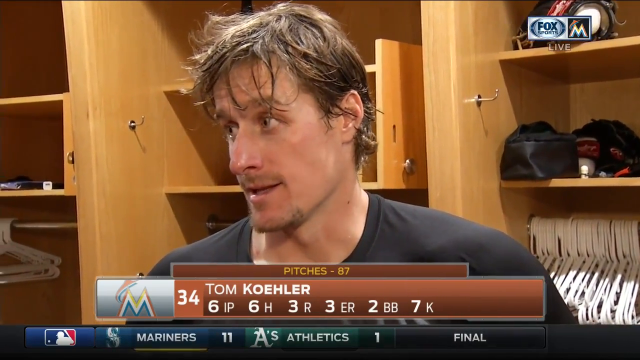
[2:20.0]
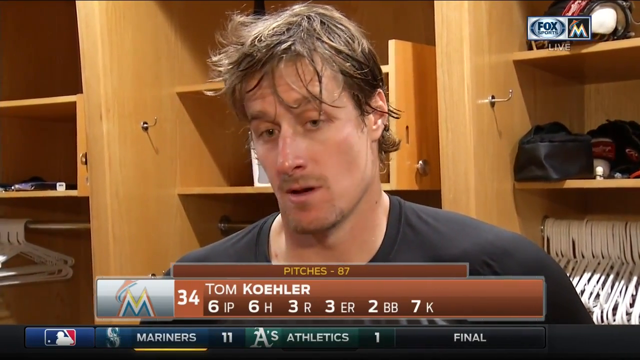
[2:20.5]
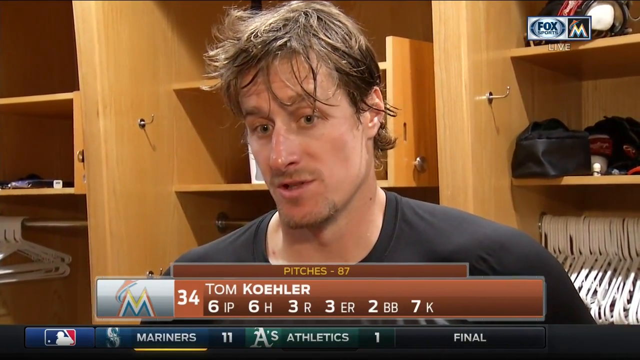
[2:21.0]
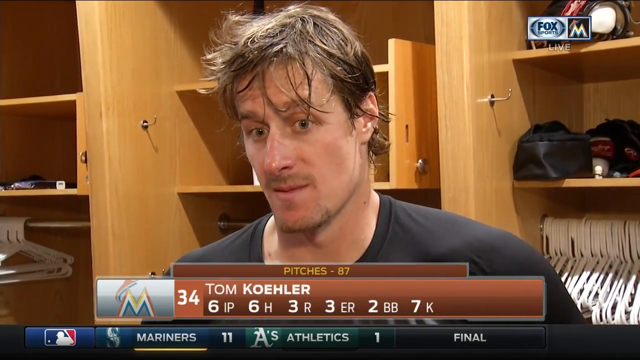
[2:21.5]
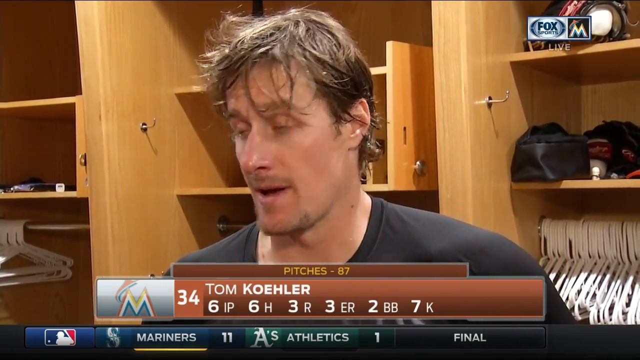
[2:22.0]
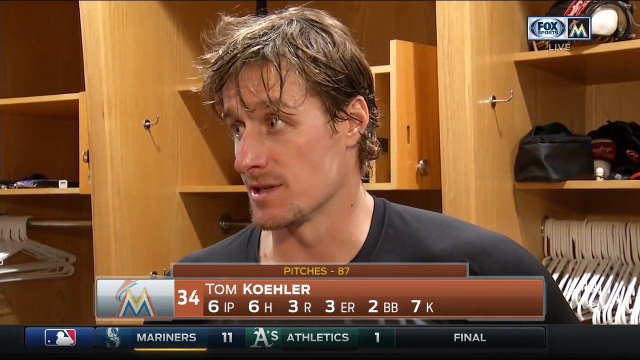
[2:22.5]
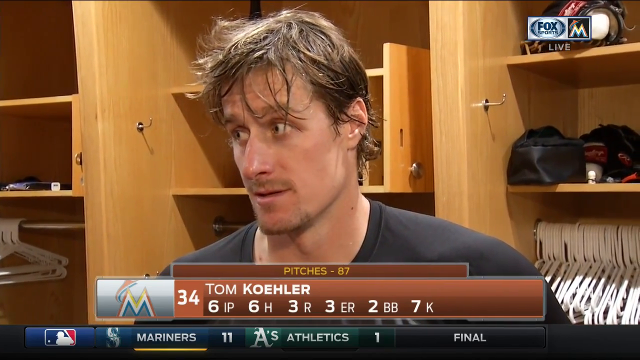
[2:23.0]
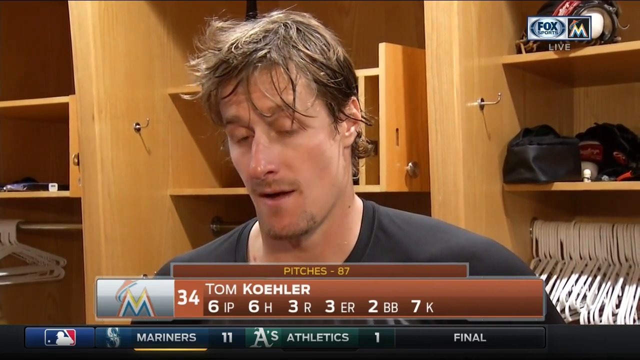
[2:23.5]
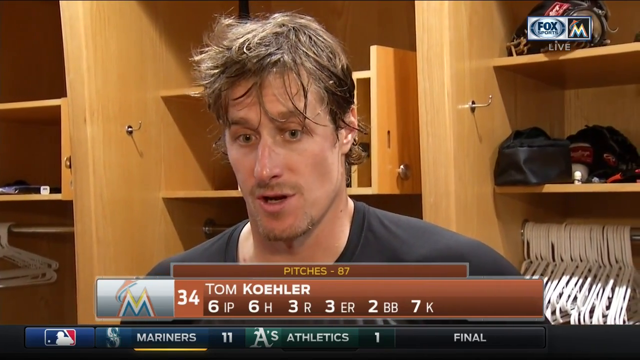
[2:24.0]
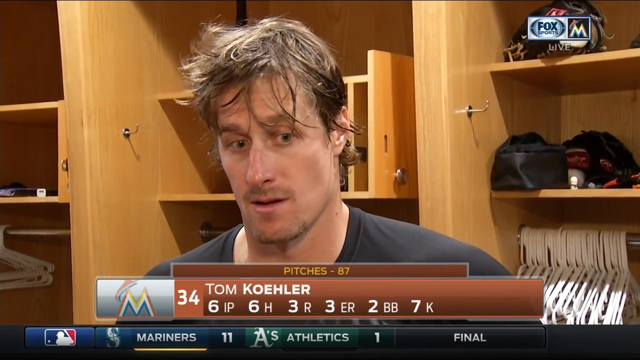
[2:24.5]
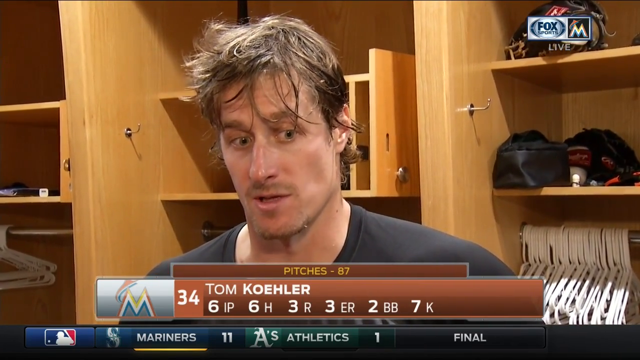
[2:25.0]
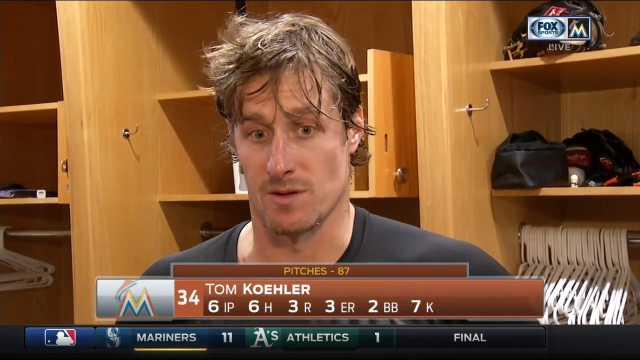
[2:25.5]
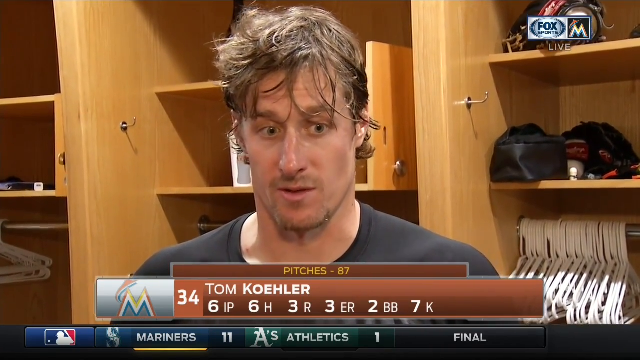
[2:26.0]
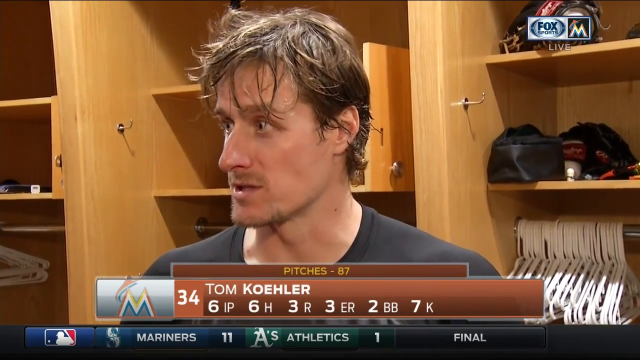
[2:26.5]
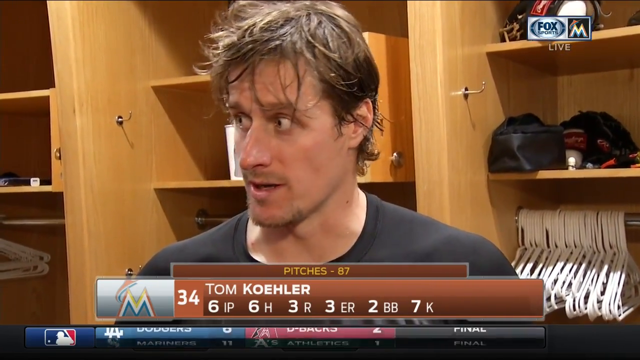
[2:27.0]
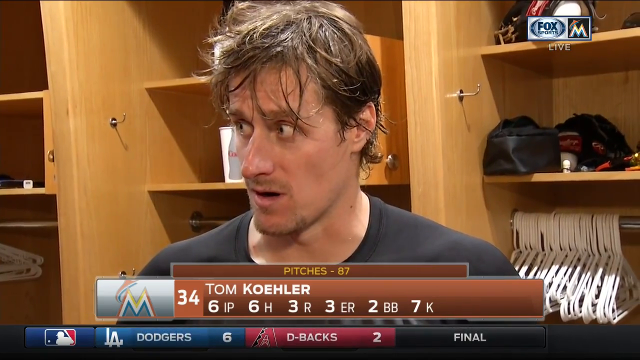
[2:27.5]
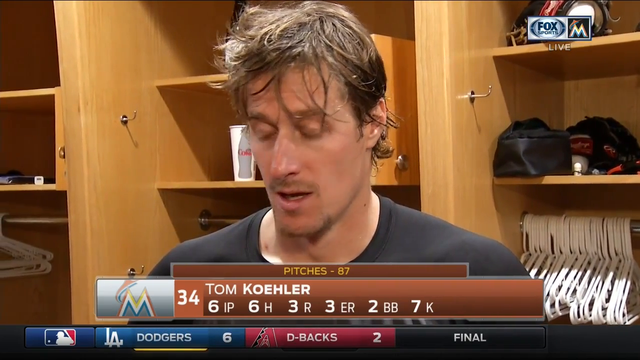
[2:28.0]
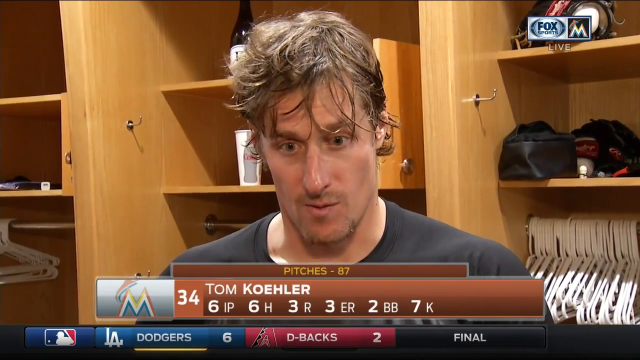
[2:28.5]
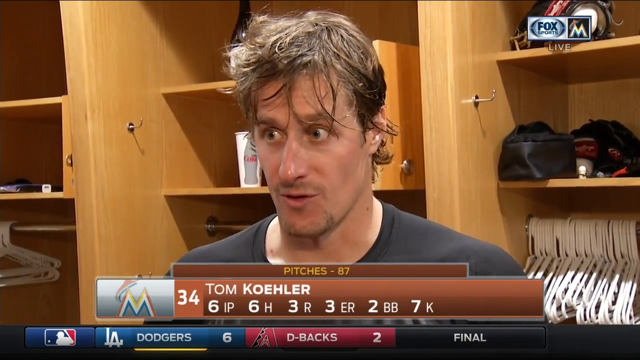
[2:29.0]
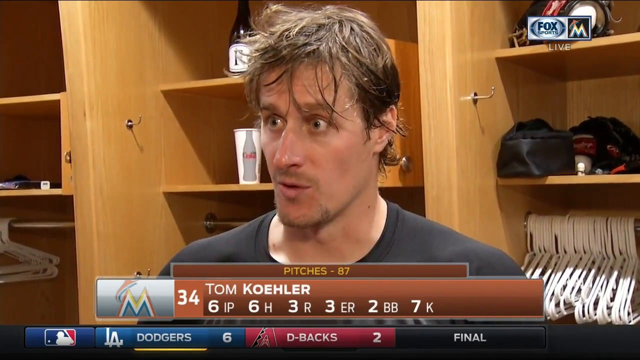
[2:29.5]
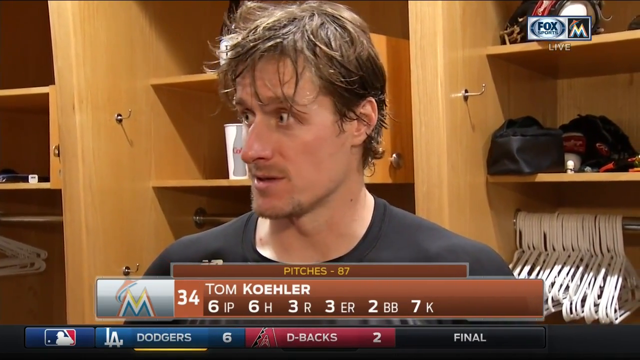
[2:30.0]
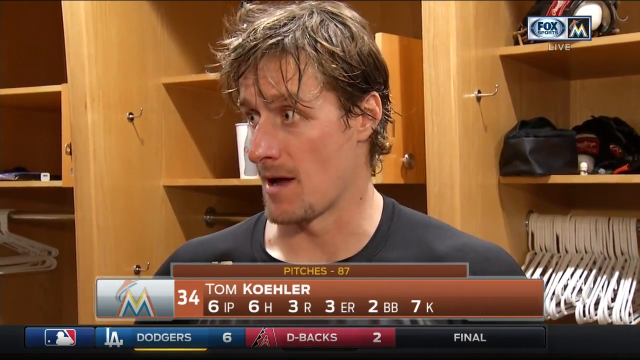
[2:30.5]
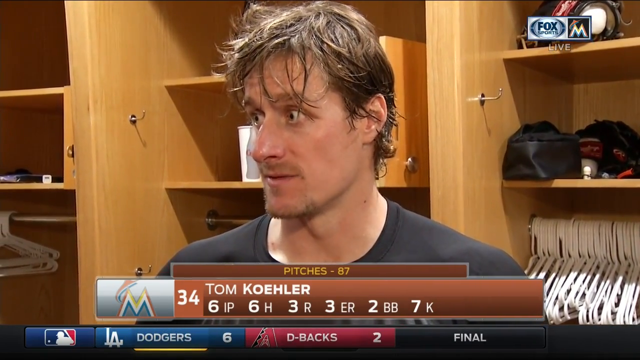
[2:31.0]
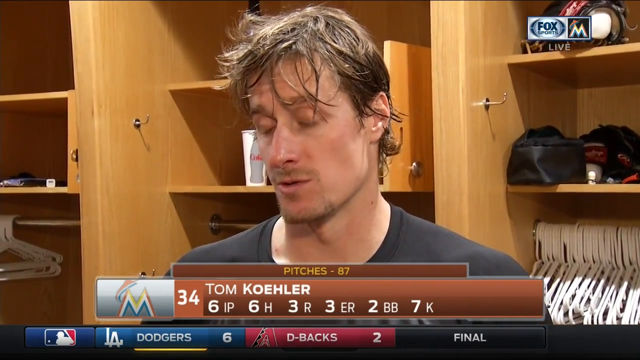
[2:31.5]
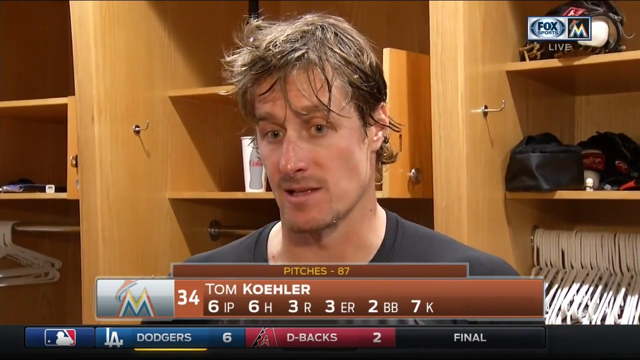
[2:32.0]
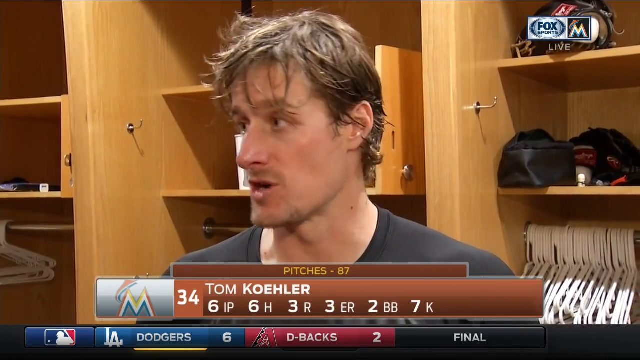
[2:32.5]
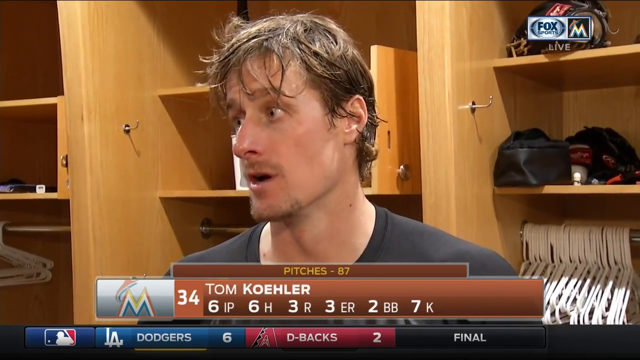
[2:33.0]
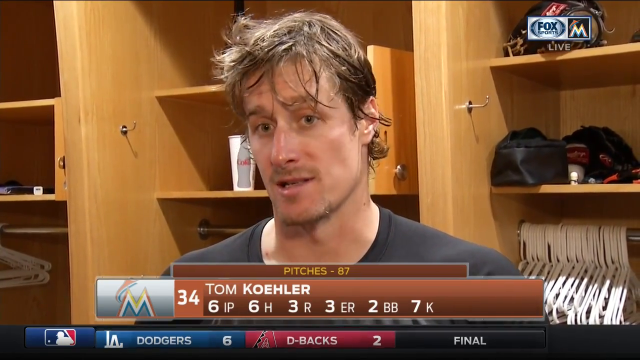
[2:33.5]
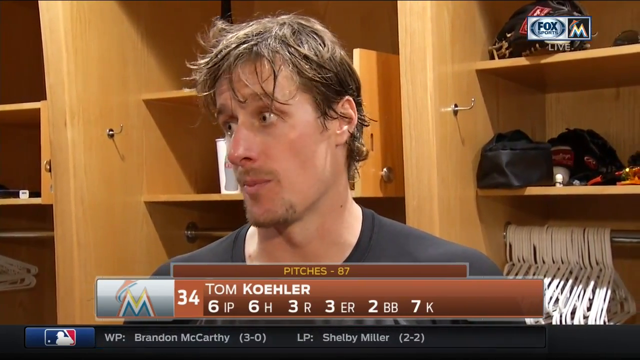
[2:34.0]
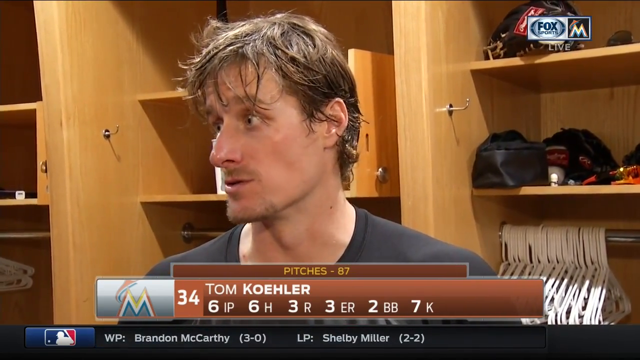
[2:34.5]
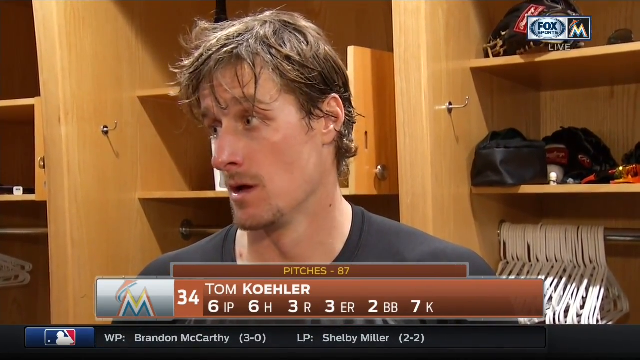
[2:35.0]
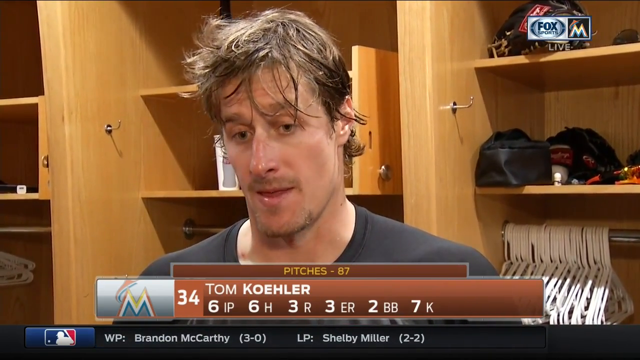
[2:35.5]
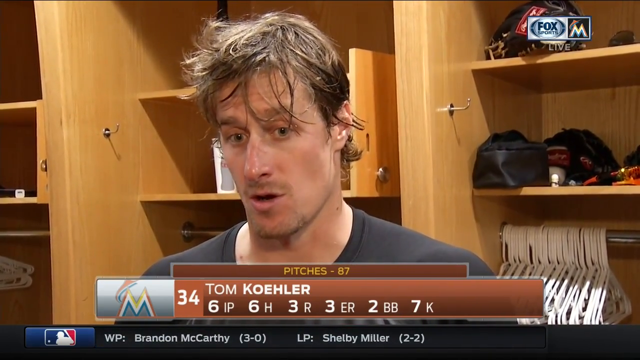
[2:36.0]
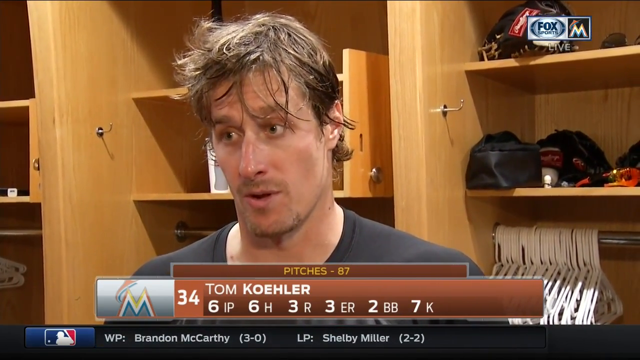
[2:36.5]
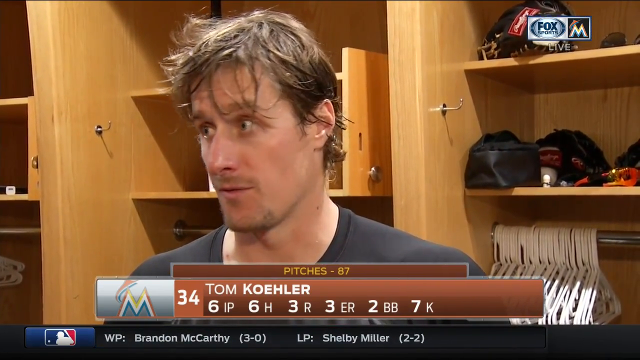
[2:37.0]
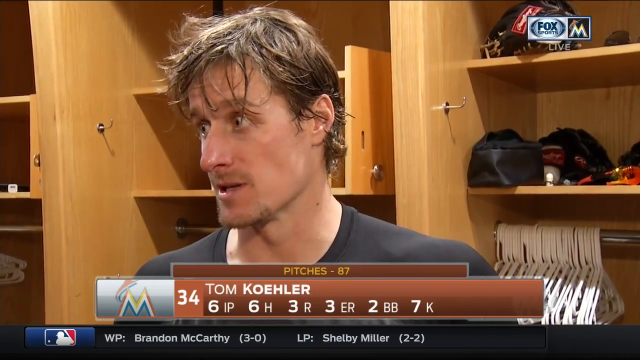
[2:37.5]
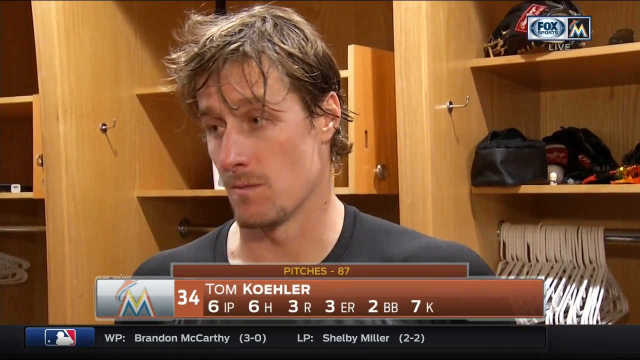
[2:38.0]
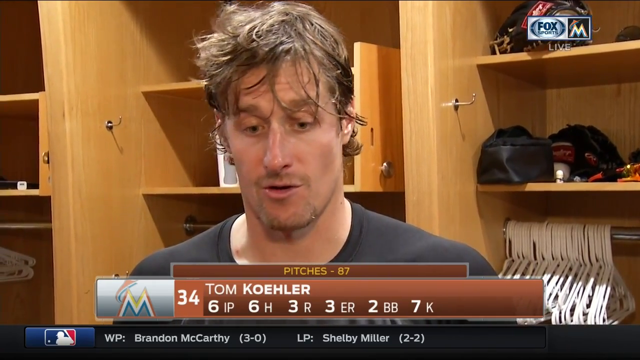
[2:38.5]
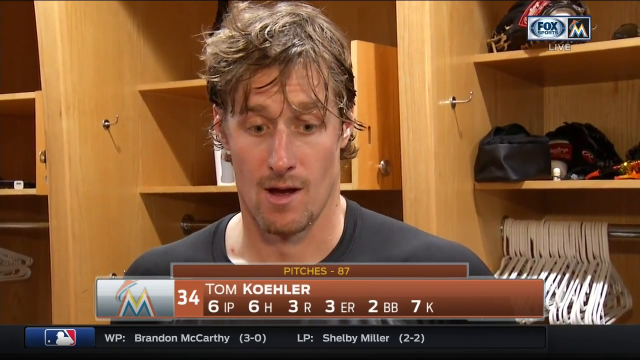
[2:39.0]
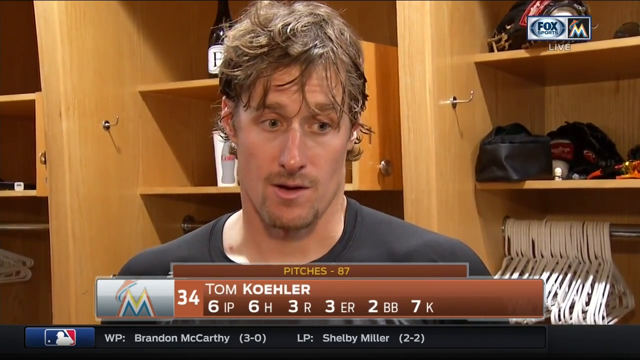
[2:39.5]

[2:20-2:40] He talks to the reporter on the left, his right. It looks like the Mariners beat the Athletics 11 to 1. The hangers on the right cabinet number about 30 or so and are all pushed to the left side against the divider separating the two areas. He then addresses the reporter on the right, possibly a different reporter than before; he is clearly addressing a particular person. A final score at the bottom shows Dodgers 6, Diamondbacks 2, with winning pitcher Brandon McCarthy, 3-0, and losing pitcher Shelby Miller, 2-2. Instead of scrolling horizontally, the bottom part now changes vertically, flipping like a page.